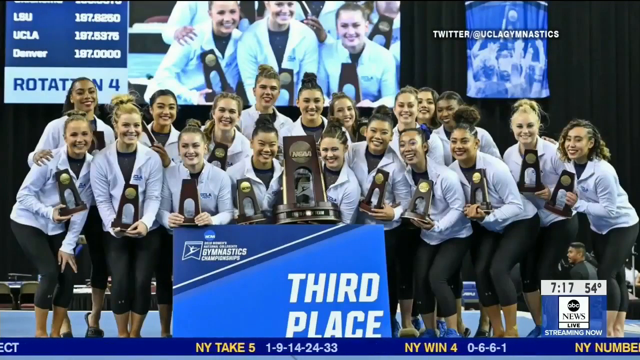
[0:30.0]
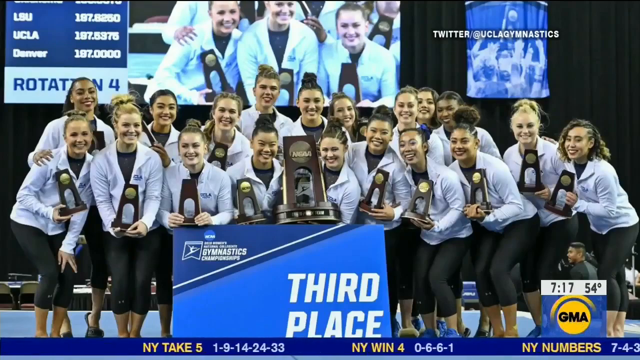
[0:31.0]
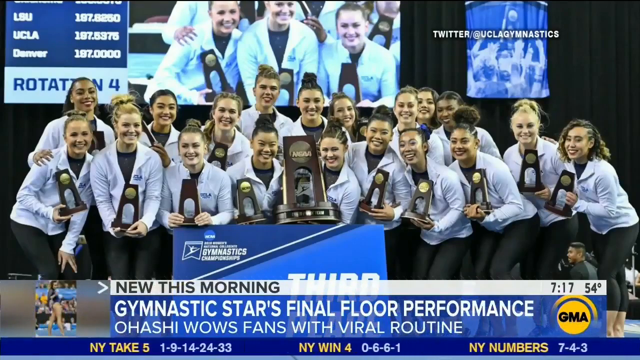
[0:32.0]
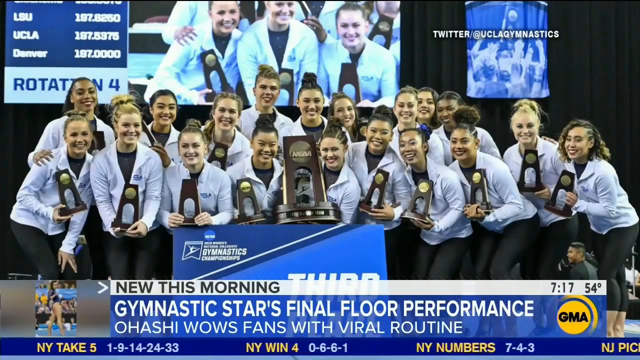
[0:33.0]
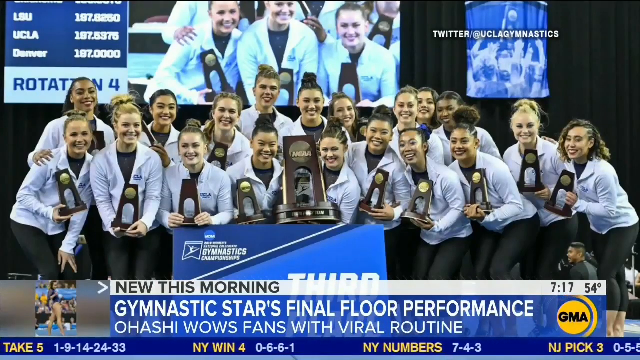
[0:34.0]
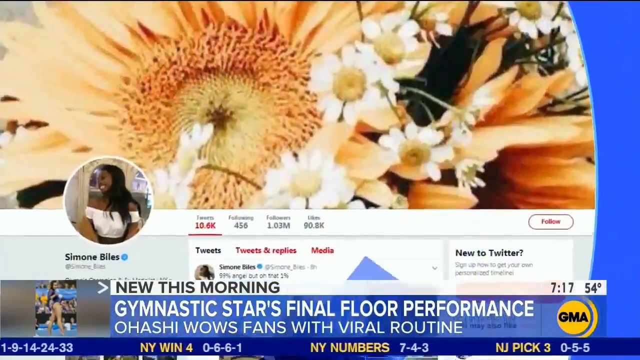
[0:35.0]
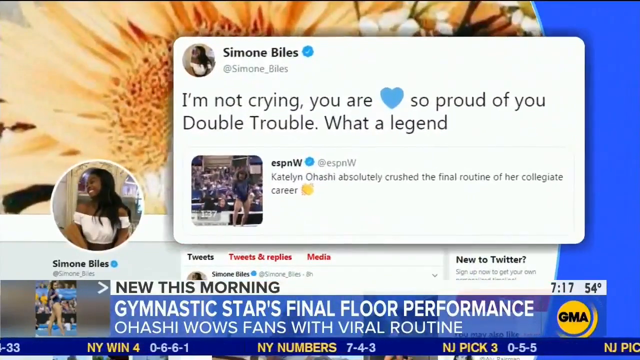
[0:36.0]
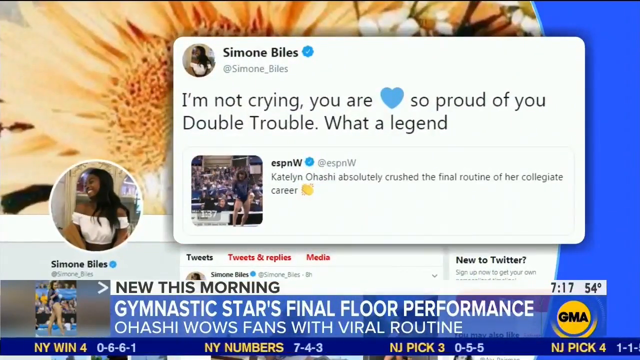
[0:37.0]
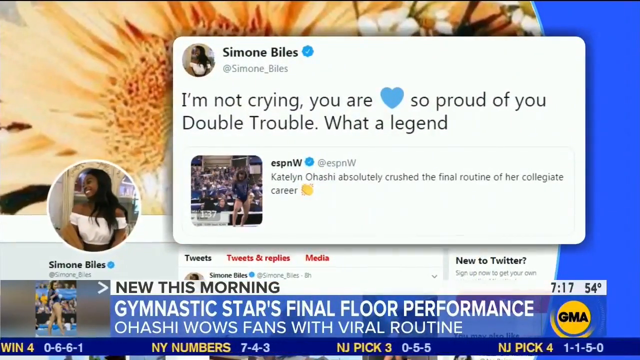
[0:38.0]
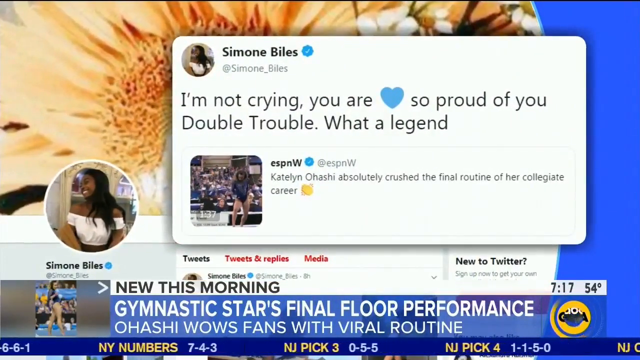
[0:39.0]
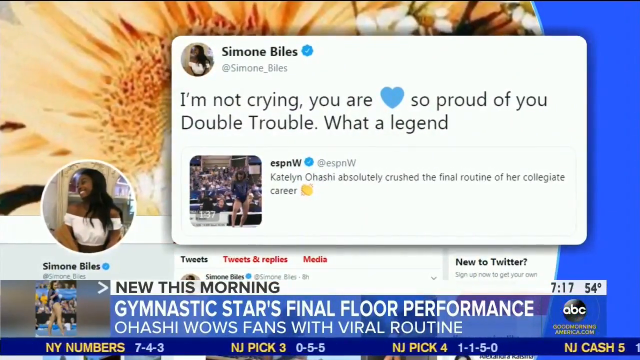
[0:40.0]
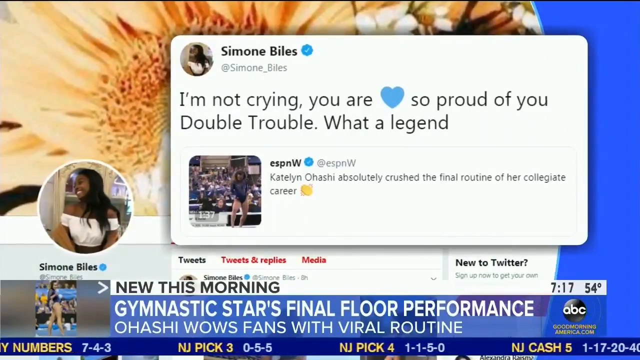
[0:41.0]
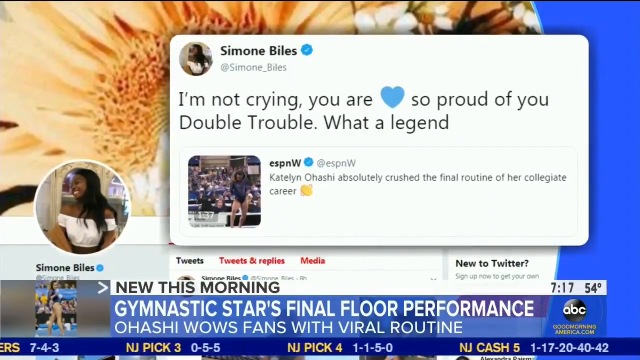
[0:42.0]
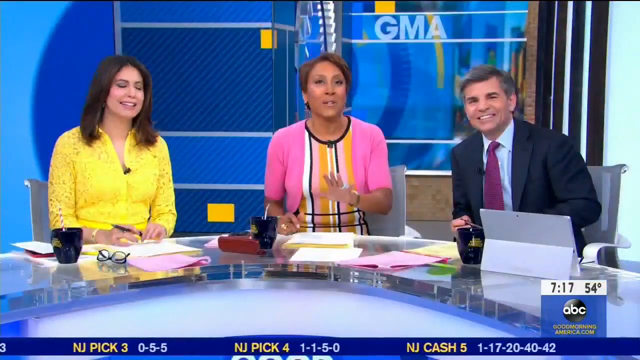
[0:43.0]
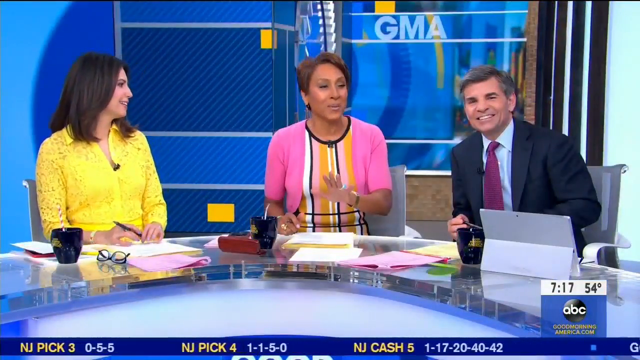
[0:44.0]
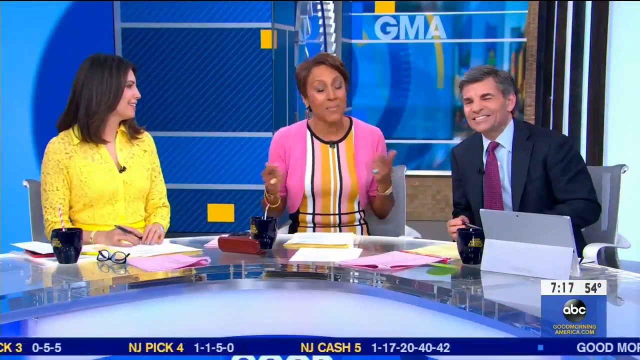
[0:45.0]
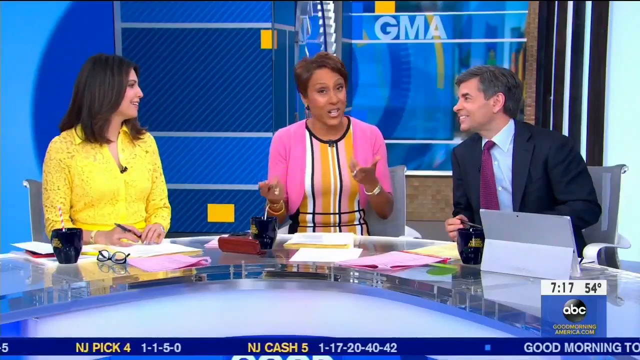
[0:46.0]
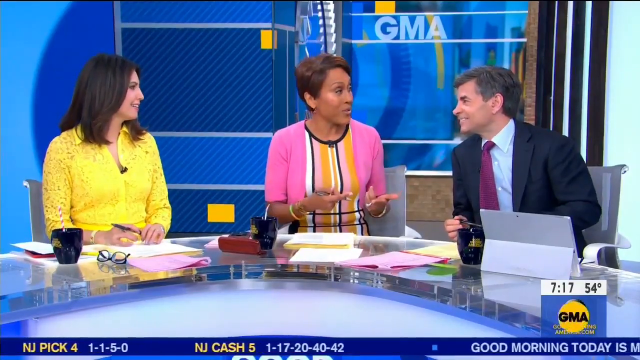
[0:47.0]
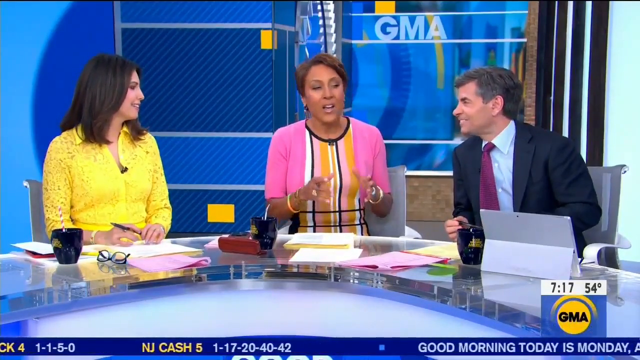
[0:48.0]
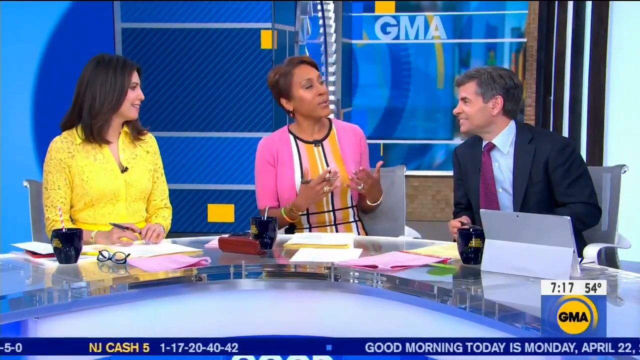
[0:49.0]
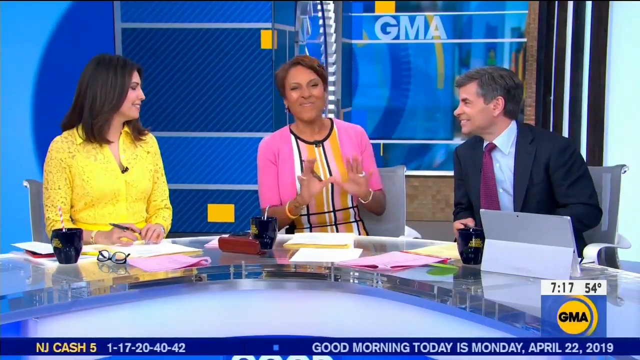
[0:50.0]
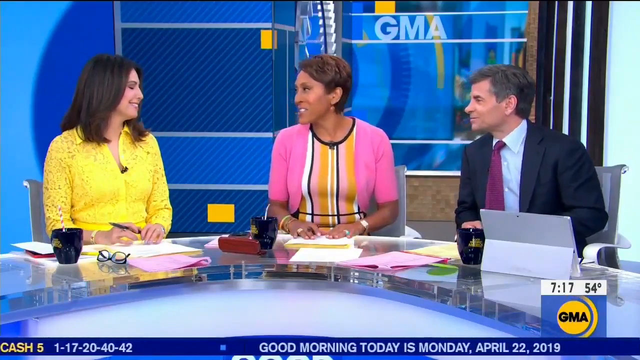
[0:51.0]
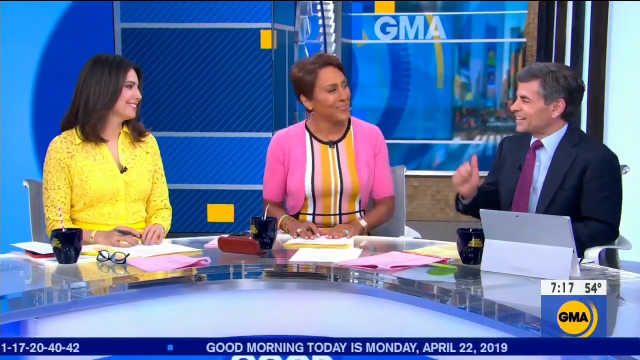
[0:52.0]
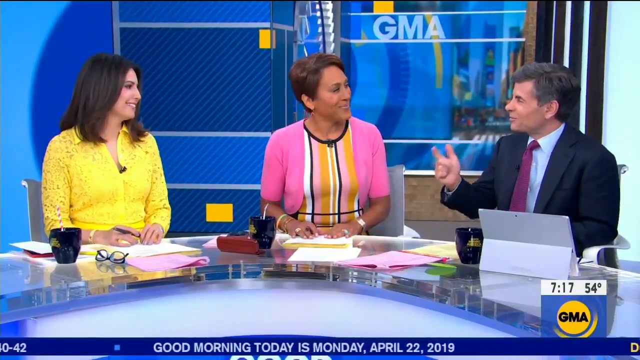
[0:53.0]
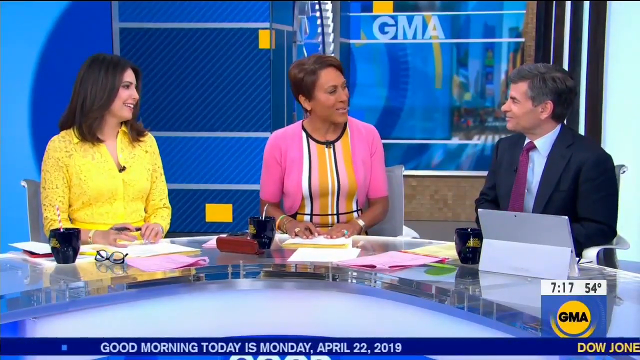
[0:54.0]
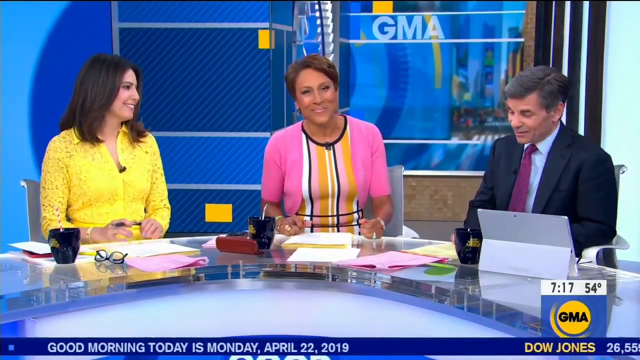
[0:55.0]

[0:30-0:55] The photo of the NCAA gymnastics championship team appears again, showing the girls who won third place at the tournament; all of them have small cups, and one of them holds the biggest cup. A news topic reads "Gymnastics stars final floor performance, Ohashi". Next, a Twitter post from Simone Biles reads "I'm not crying, you are loved, so proud of you, double trouble, what a legend". The three reporters of the ABC TV station appear again: a woman in a yellow dress, a woman in a pink, colorful dress, and a man wearing a blue shirt with a red tie and a dark suit. They smile and talk to each other and to the camera.